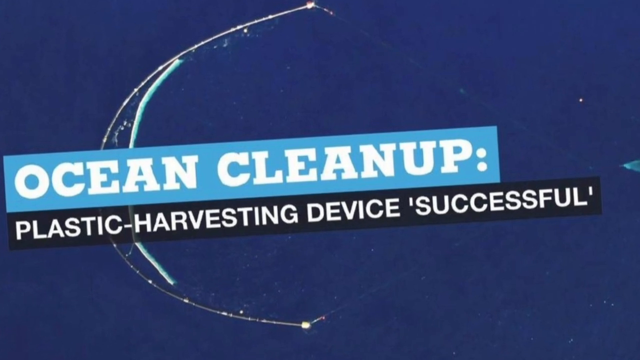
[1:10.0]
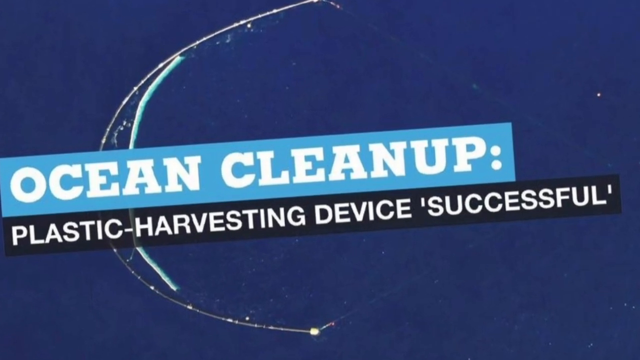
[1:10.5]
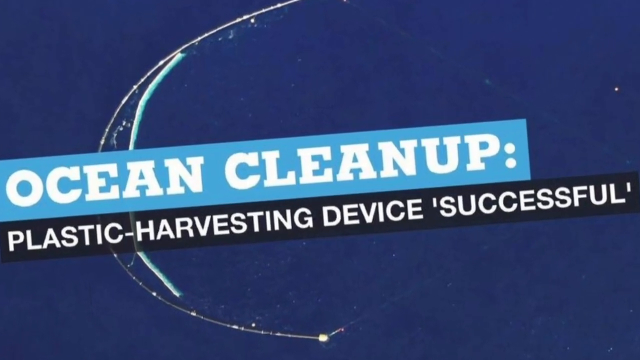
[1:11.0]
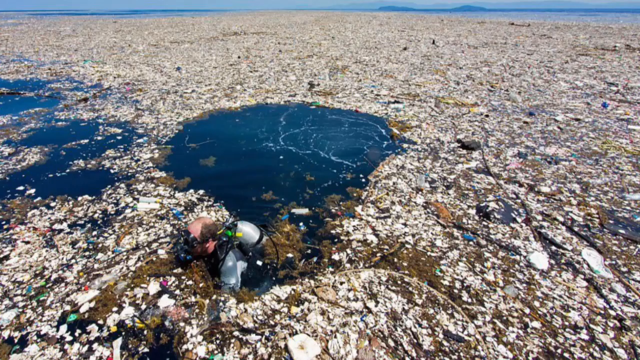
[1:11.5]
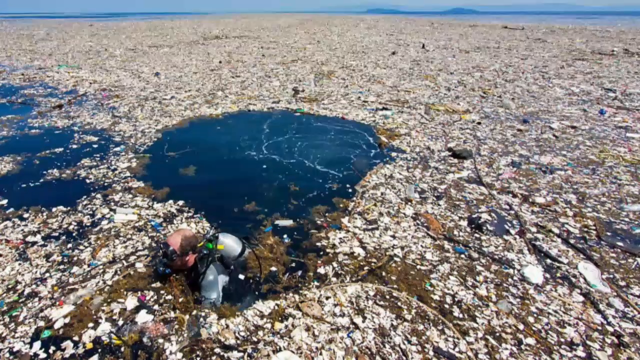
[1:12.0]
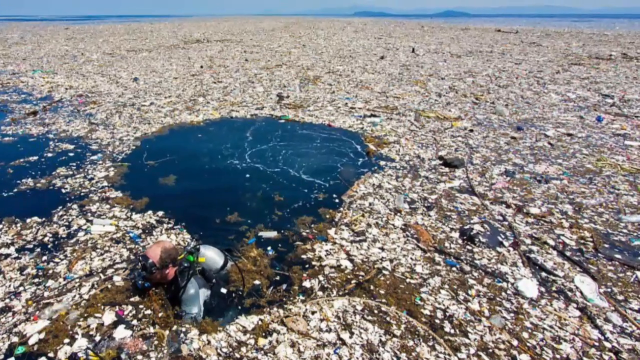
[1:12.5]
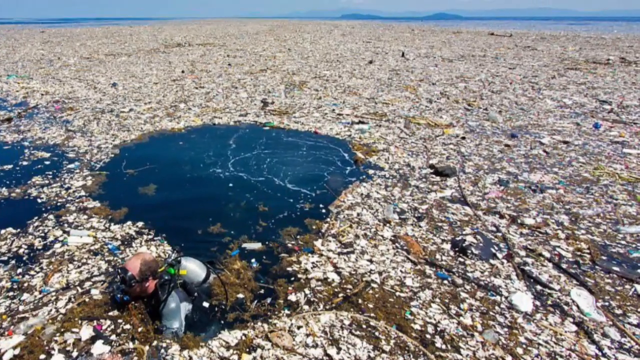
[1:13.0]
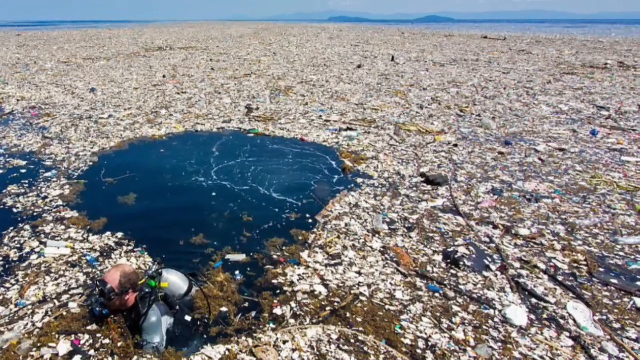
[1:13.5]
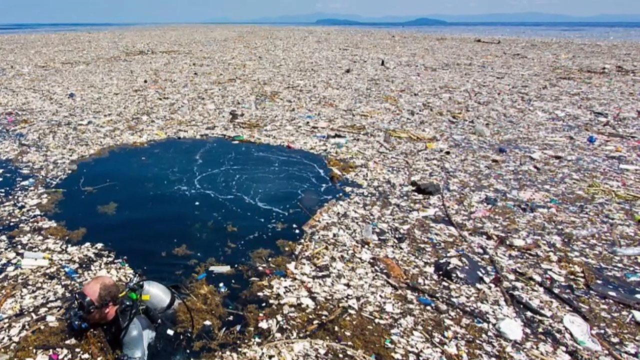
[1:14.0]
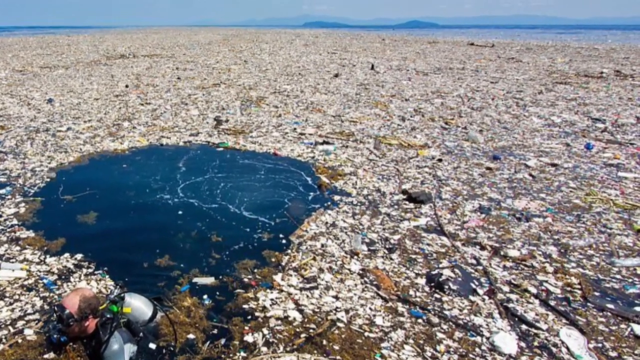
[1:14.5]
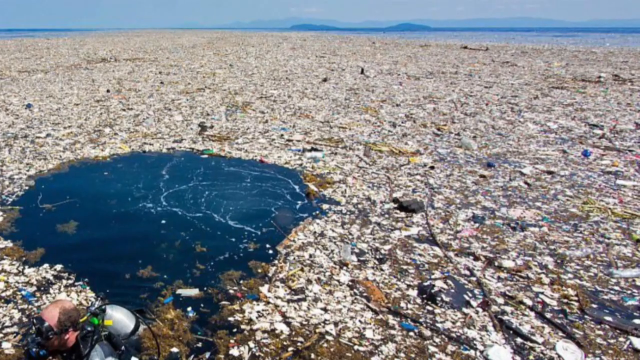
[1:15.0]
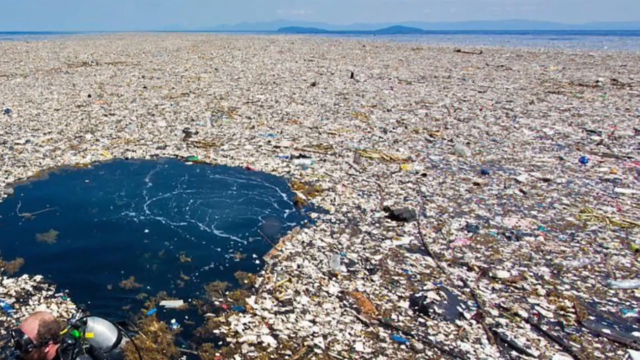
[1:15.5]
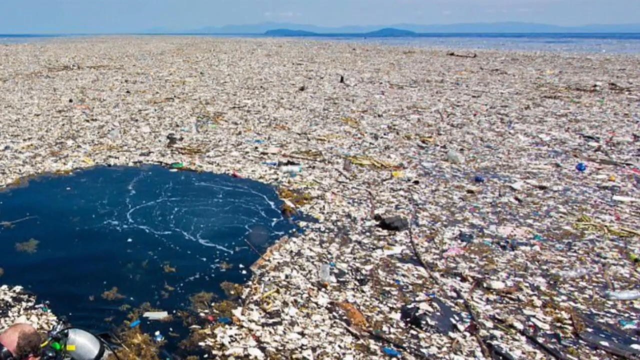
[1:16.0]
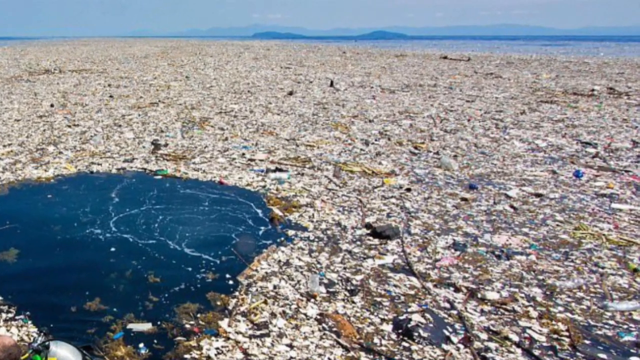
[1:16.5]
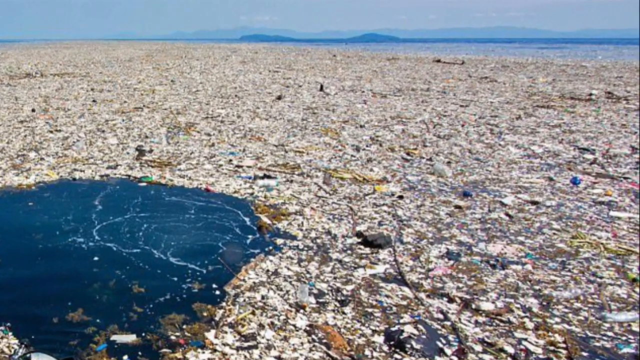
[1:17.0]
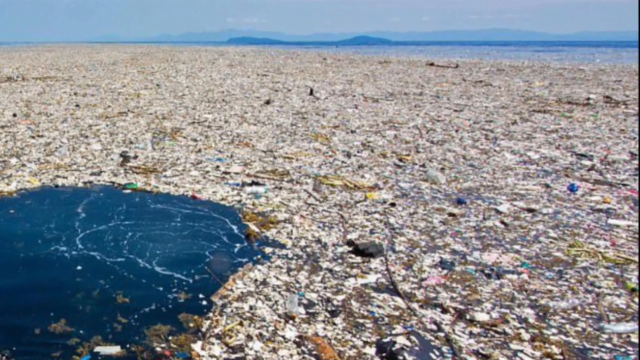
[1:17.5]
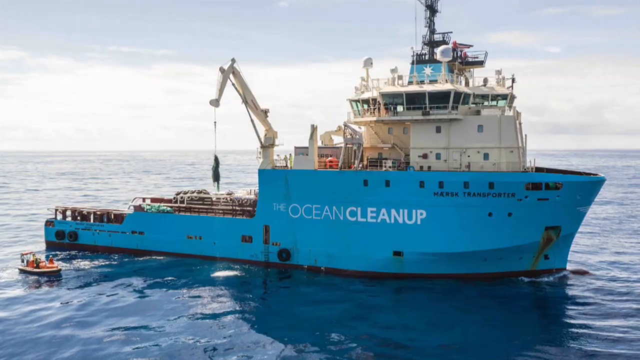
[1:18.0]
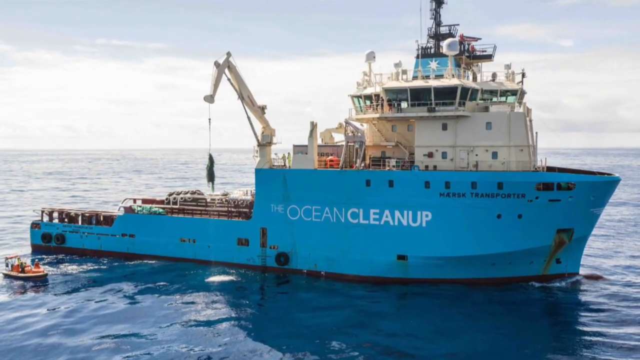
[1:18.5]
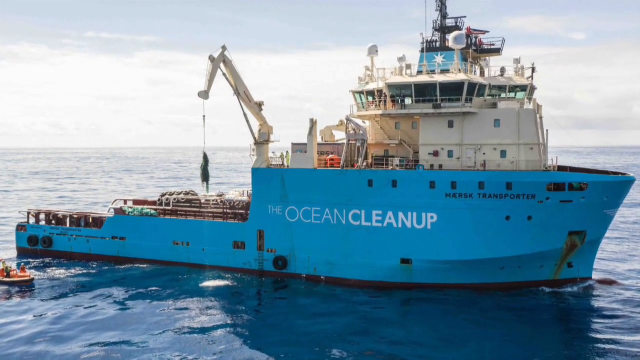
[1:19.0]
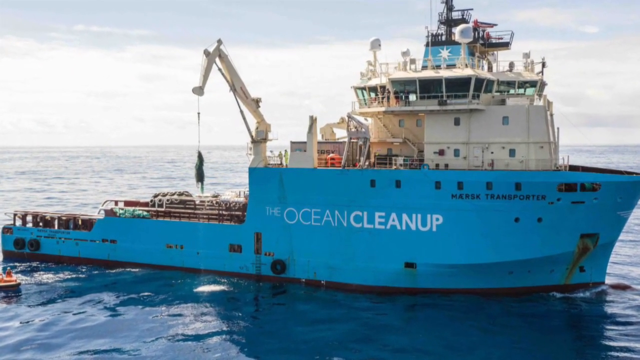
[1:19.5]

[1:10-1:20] "The ocean cleanup" is written in white on a light blue background, and underneath it "plastic harvesting device successful" is written in white on a black rectangular background. Next comes a closer view of the earth, showing discarded debris. The debris is so heavily dispersed that it covers a large portion of the water. In the middle there is only a small brown portion where the crystal blue water can be seen, and what looks like some marine life swimming in this small circular area. Waves crash in this small area of water. The crystal blue sky is in the background.